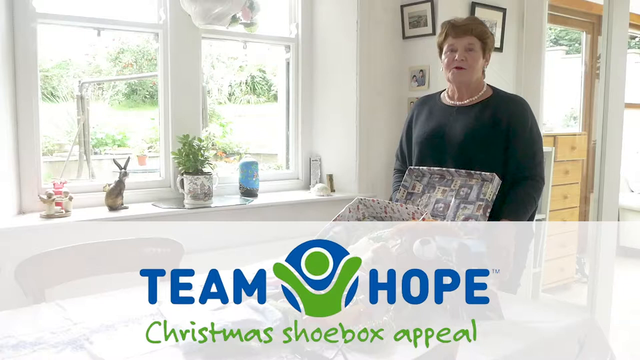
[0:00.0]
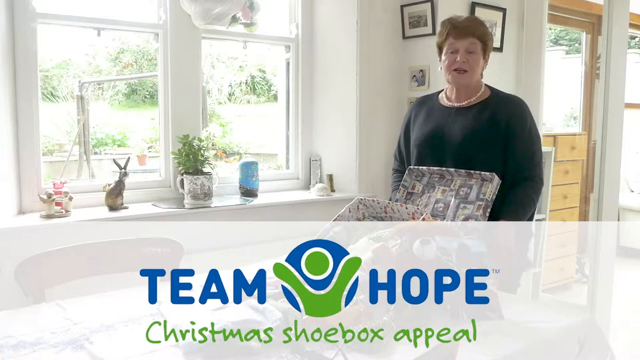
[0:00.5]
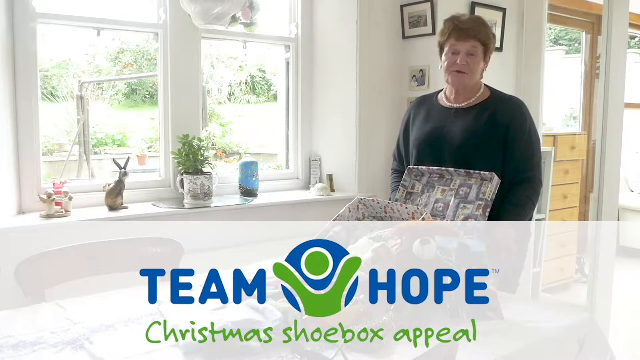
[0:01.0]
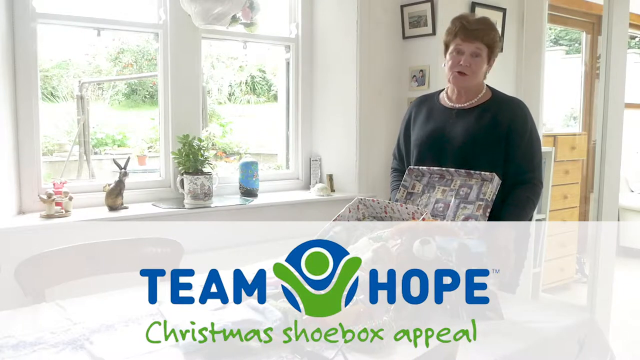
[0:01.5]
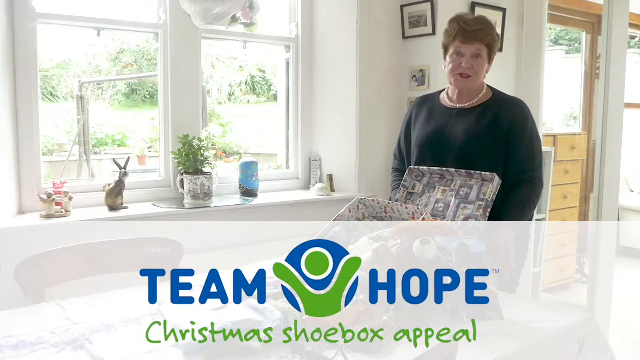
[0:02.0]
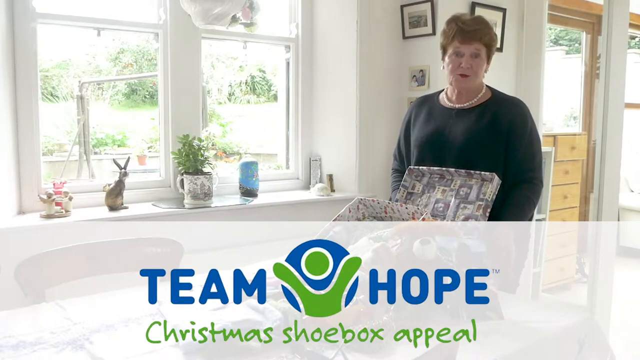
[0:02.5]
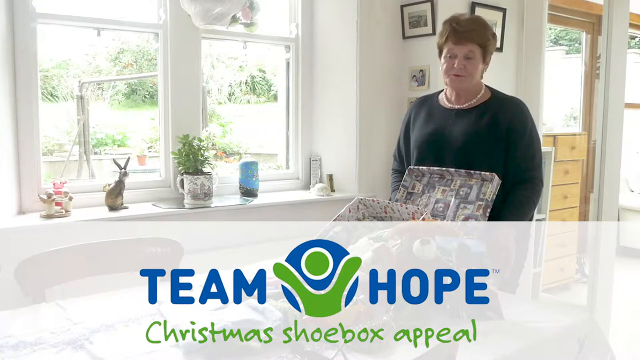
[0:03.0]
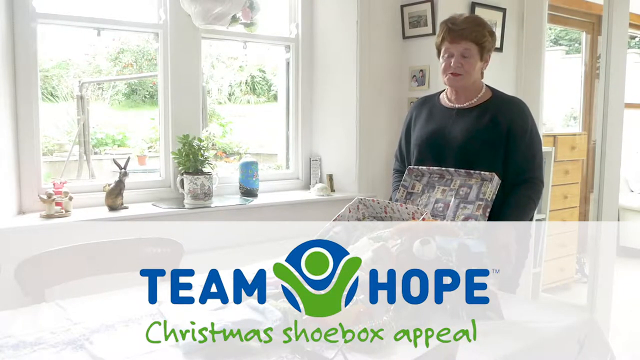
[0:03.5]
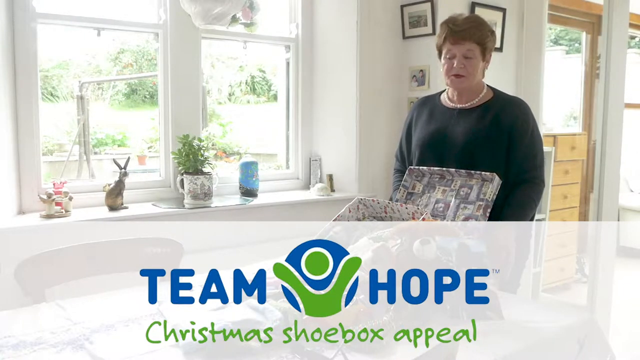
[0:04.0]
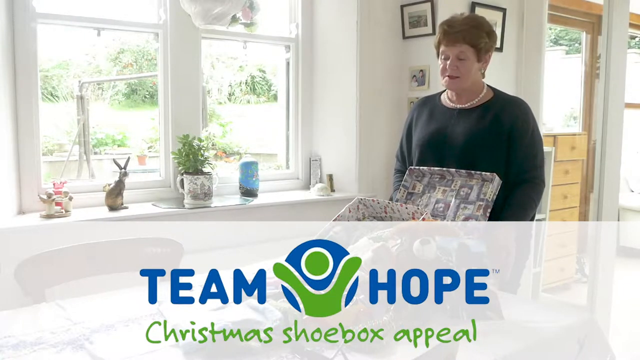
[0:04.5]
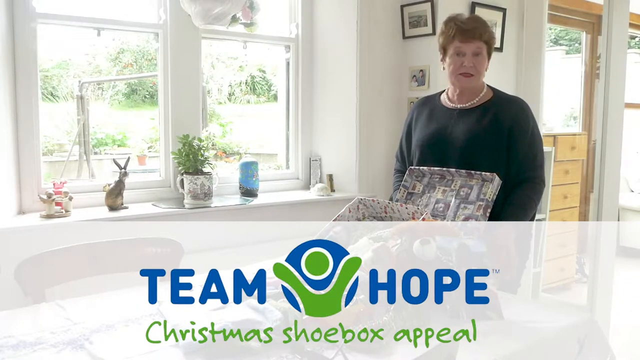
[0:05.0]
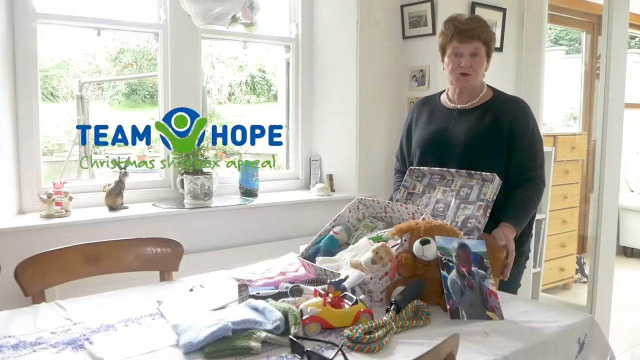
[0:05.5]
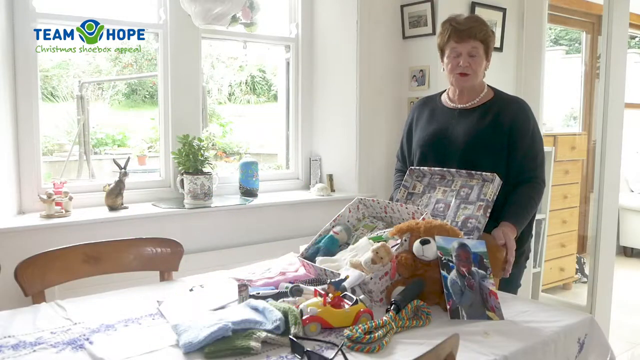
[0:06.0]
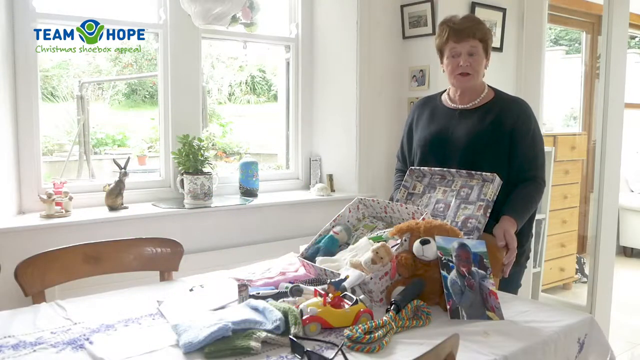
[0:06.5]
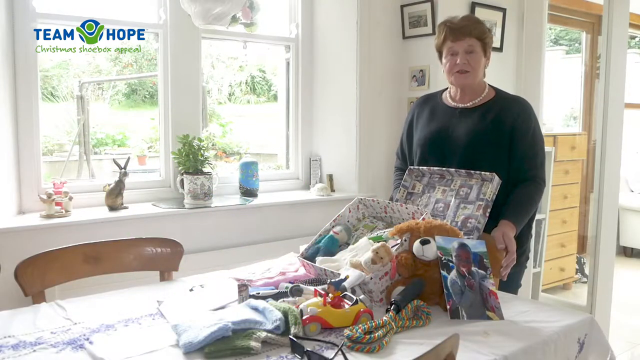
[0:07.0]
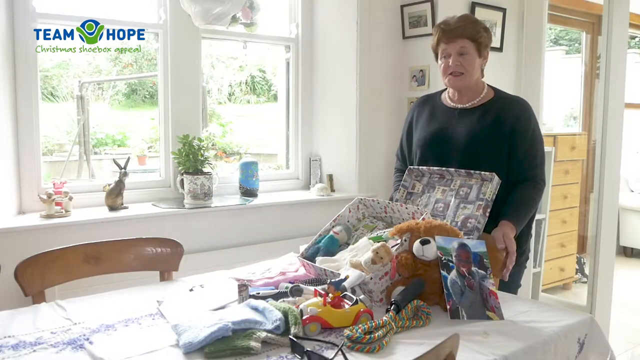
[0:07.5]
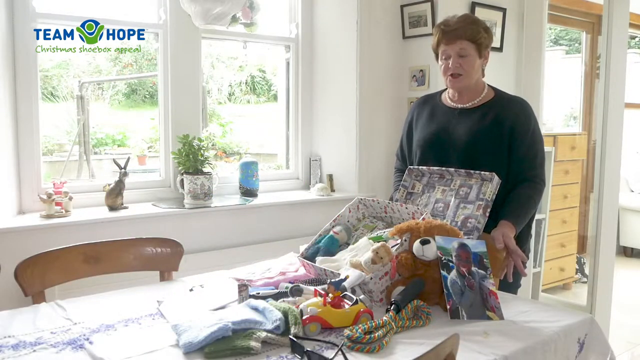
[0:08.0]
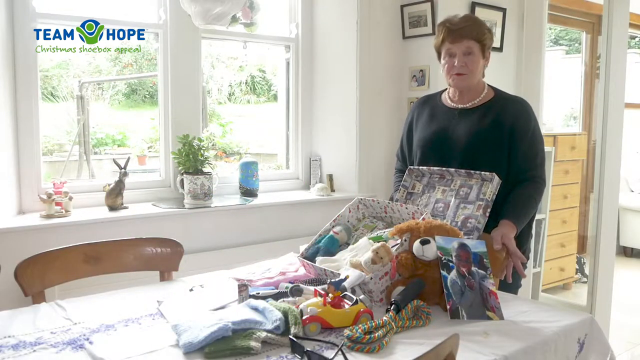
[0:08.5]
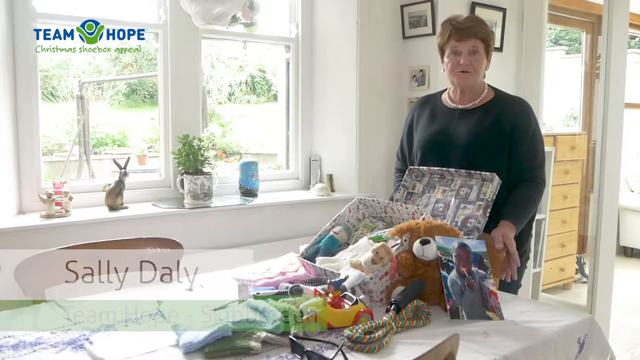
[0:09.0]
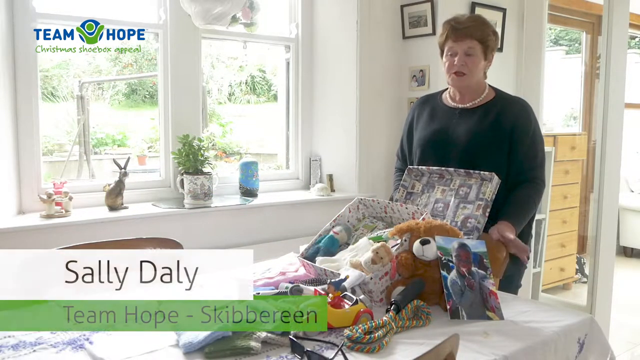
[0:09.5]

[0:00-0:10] A video advertisement for Team Hope opens with a semi-transparent white banner at the bottom of the screen, with the Team Hope logo directly below it; the banner reads "Christmas Shoebox Appeal." In the background, a woman stands at one end of her kitchen table holding a large box wrapped in wrapping paper. The lid is open, and she holds the lid while the box is propped up. The lid has different wrapping paper than the box, as the shoebox has been re-wrapped to look like a different kind of box. The graphic at the bottom then moves to the top left and becomes very small. The woman, who is very old, talks while looking at the camera and then back down at the box. On the table are teddy bears, children's toys, clothing, and a photo of a man. The room is very bright, with two large windows directly beside her letting in a lot of sunlight and more large windows behind her.